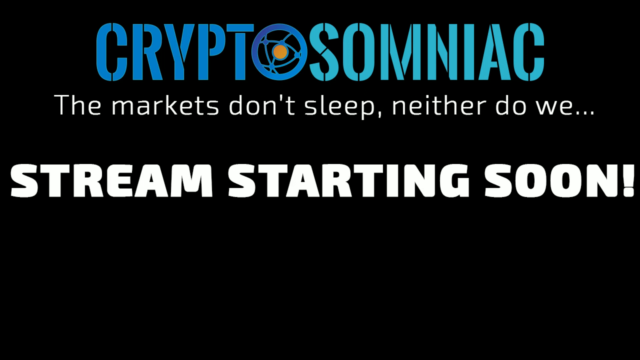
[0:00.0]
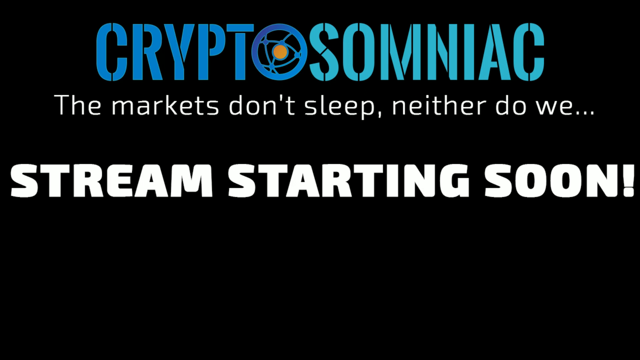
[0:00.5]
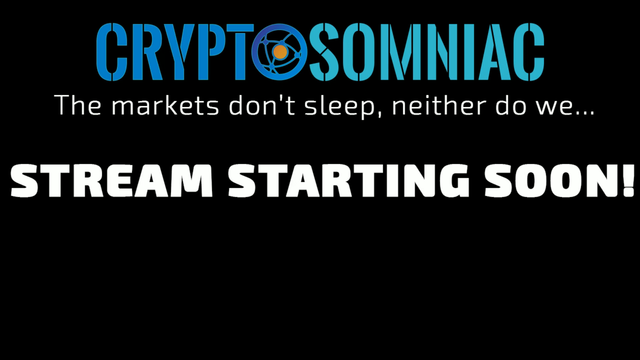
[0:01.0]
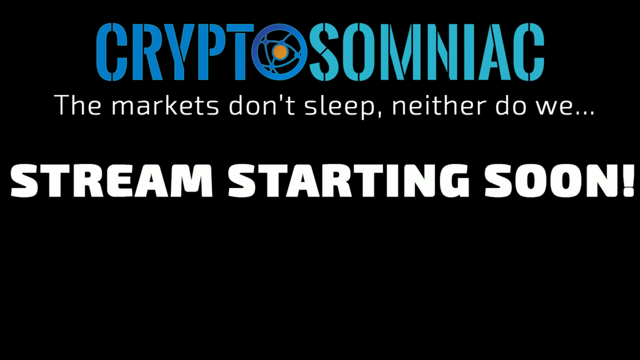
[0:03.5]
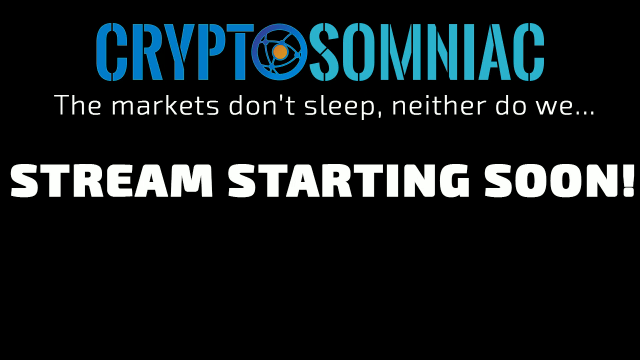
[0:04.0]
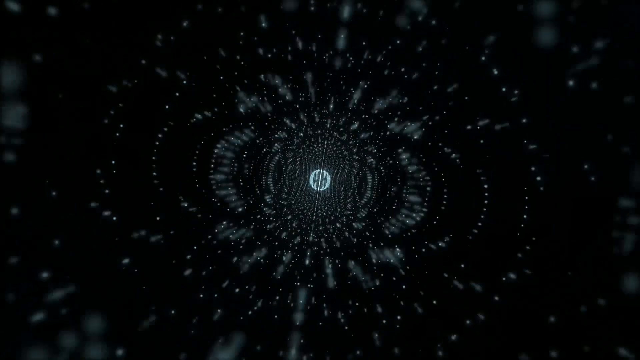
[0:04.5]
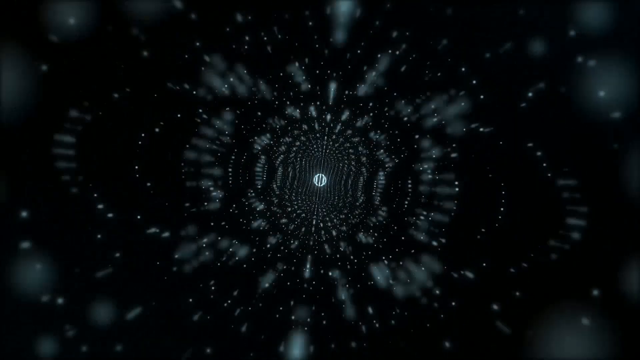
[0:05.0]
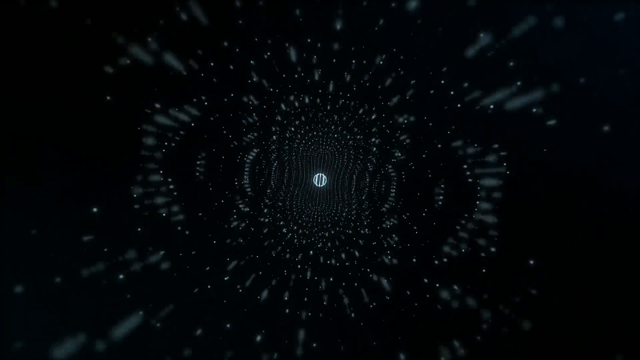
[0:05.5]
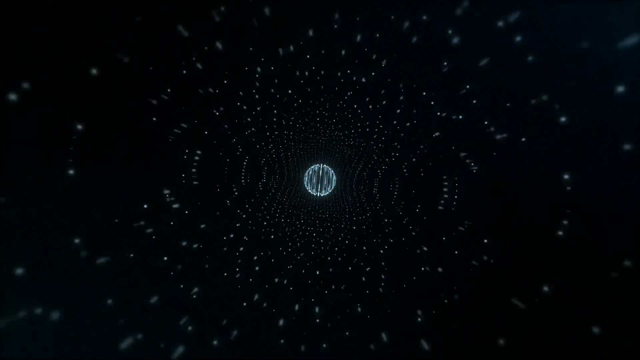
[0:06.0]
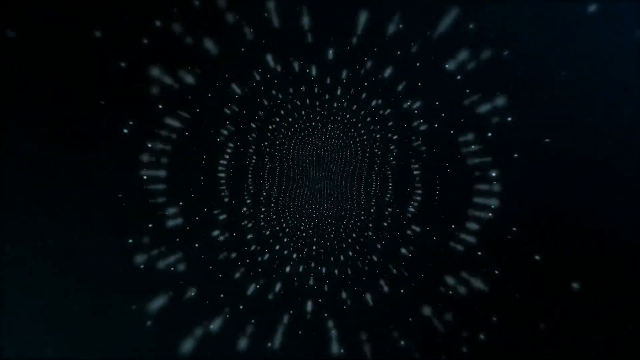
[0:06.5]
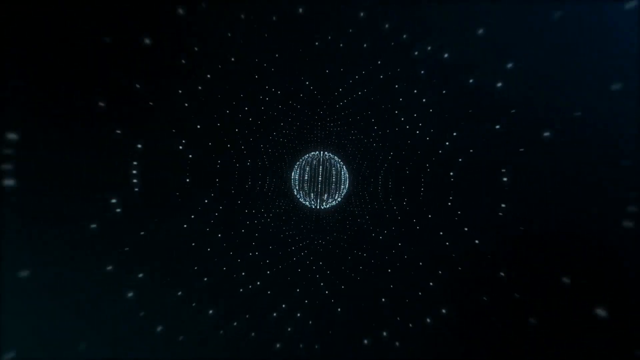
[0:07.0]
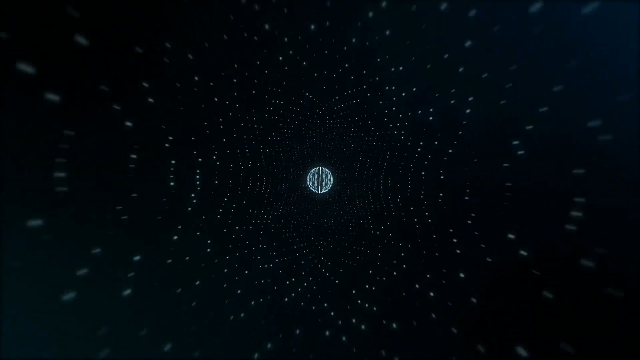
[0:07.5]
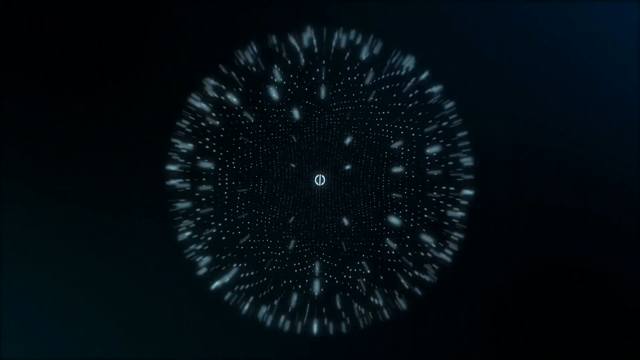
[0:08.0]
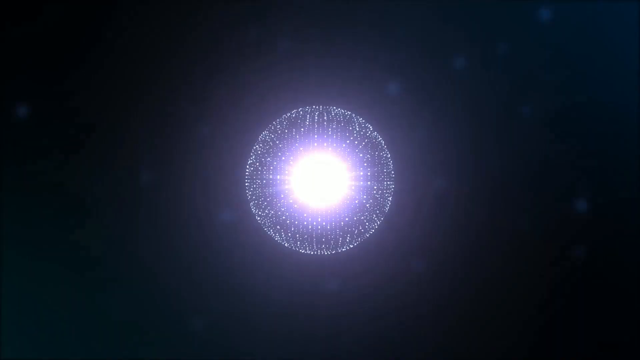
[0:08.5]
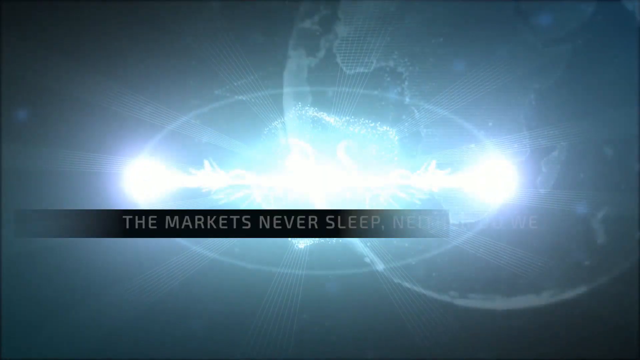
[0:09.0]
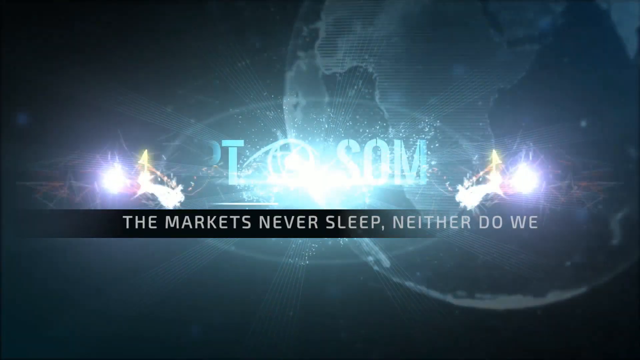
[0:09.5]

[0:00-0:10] On a black background, the word "CryptoSomniac" appears at the header in various shades of blue, with the logo serving as the O between the two words. Underneath it reads "the markets don't sleep, neither do we, streams starting soon." The image fades out a little, and then something almost like a galaxy appears, with stars forming balls of stars, before it kind of blows up into the logo. "CryptoSomniac" flashes in the middle of the screen, almost exploding, and galaxy-looking colors surround it. After the logo shows up, the world is in the background, less visible and kind of shaded.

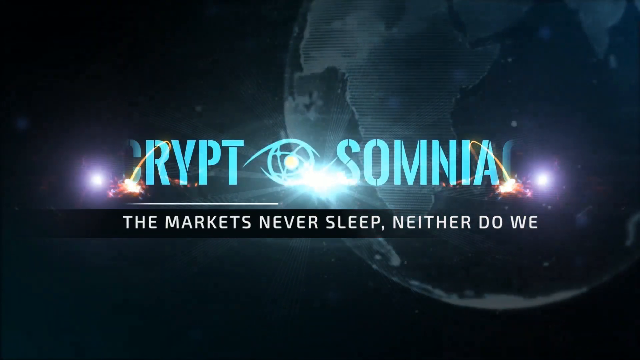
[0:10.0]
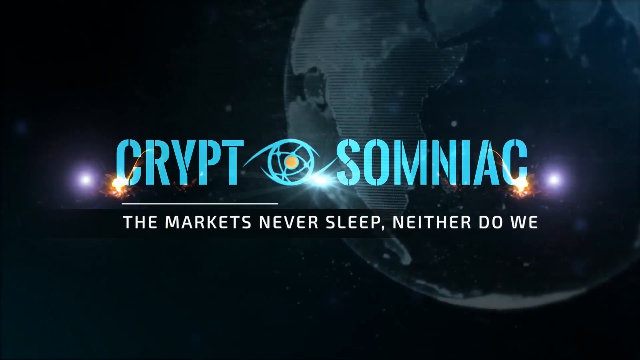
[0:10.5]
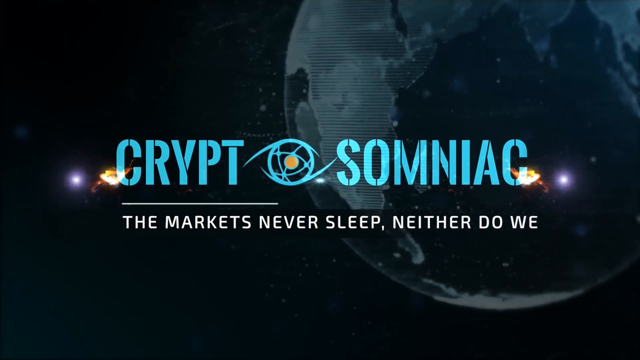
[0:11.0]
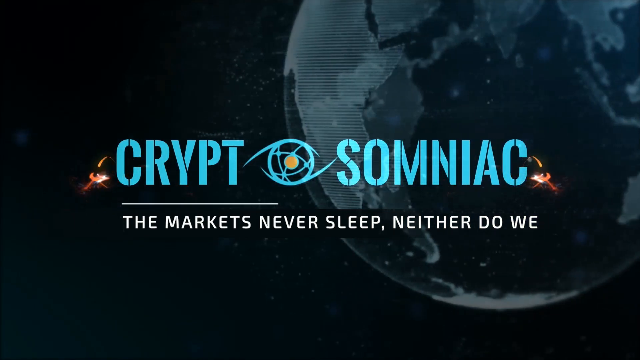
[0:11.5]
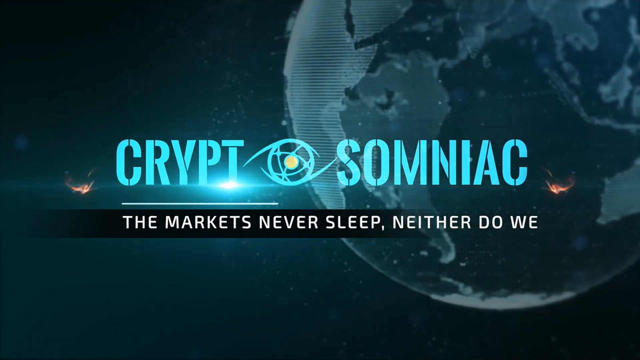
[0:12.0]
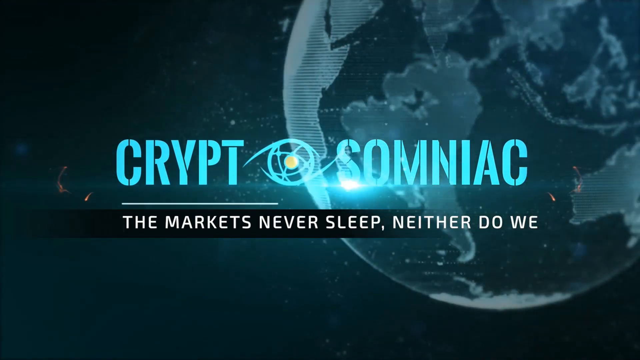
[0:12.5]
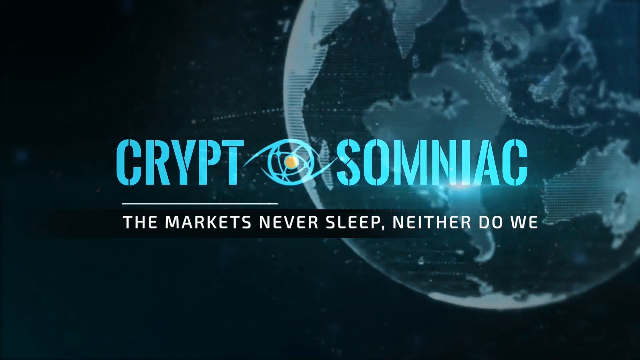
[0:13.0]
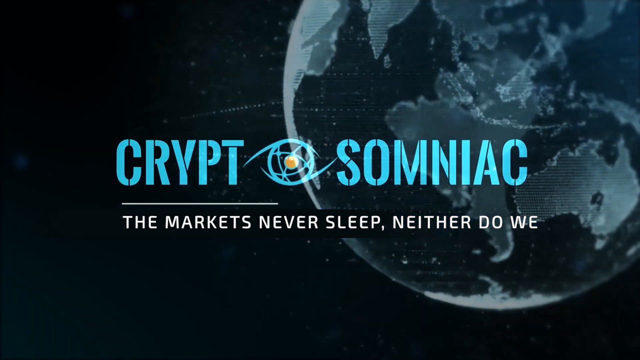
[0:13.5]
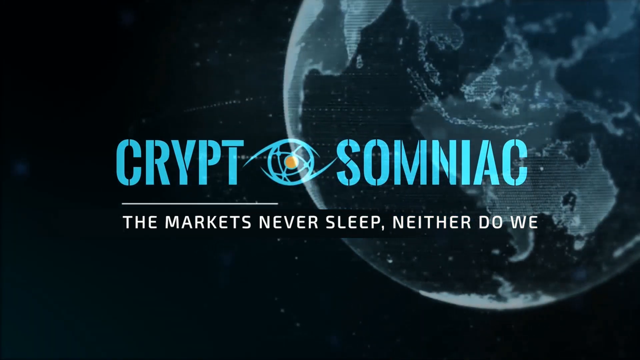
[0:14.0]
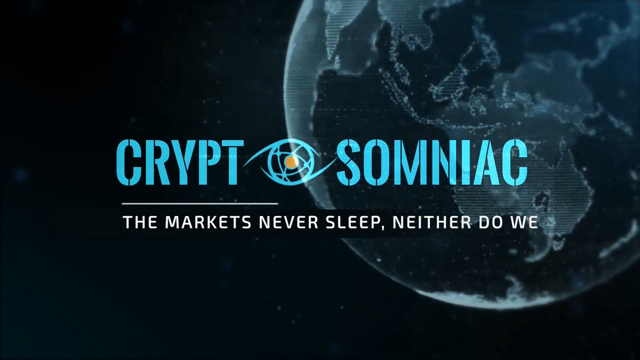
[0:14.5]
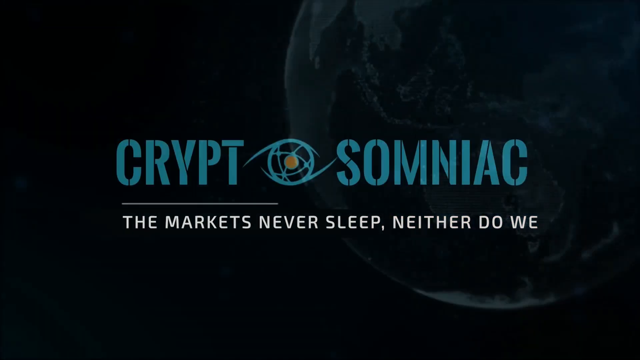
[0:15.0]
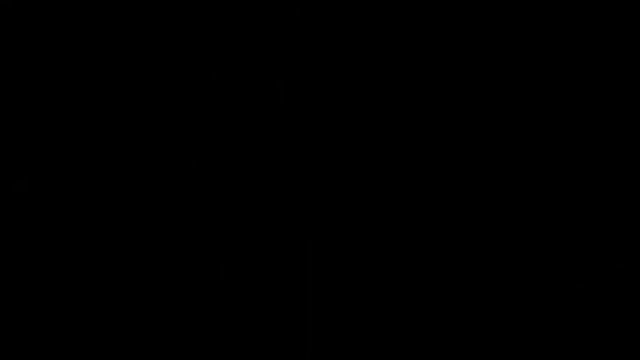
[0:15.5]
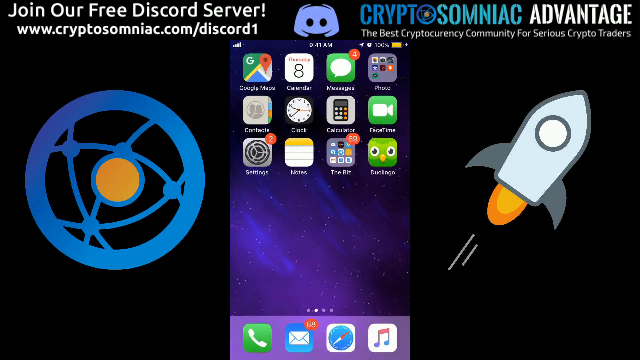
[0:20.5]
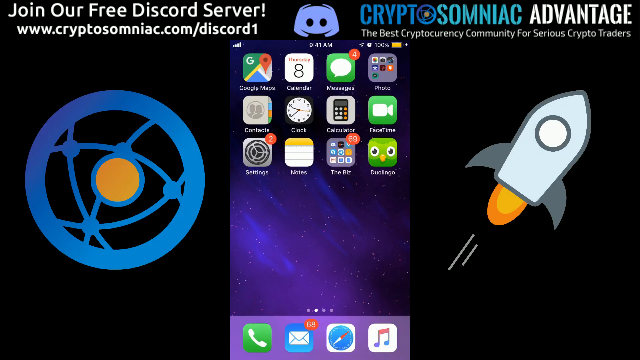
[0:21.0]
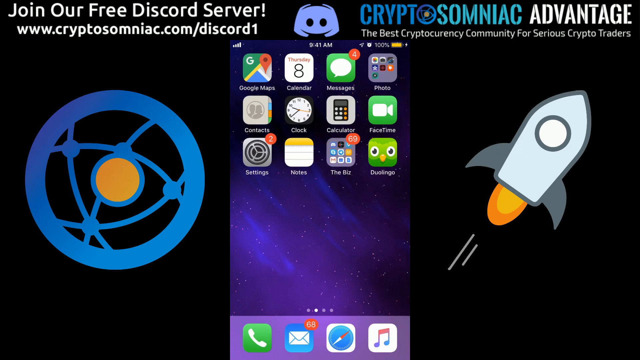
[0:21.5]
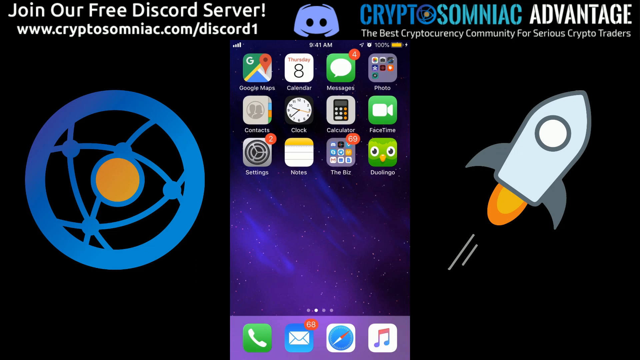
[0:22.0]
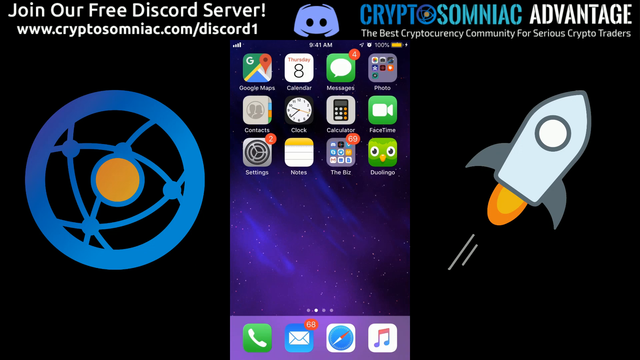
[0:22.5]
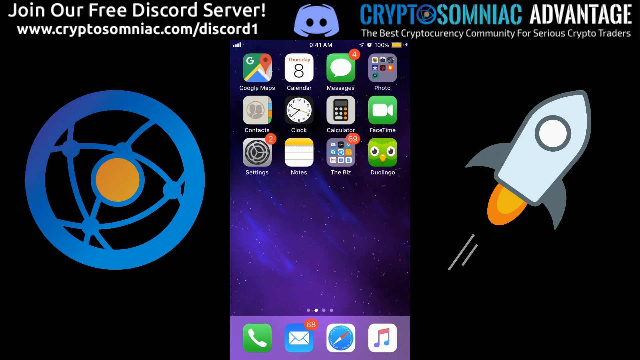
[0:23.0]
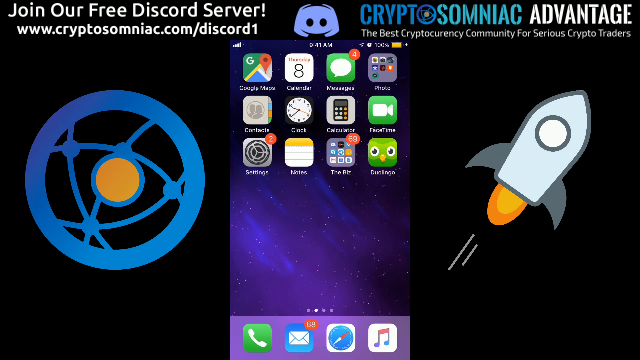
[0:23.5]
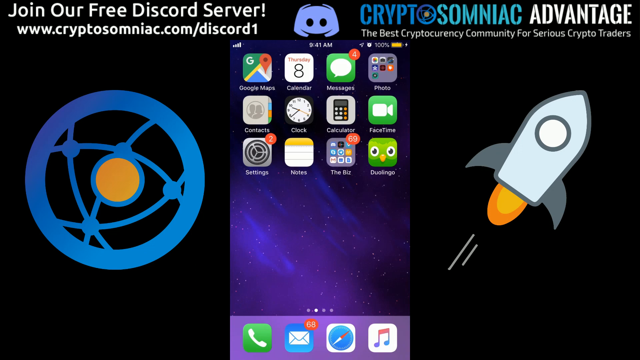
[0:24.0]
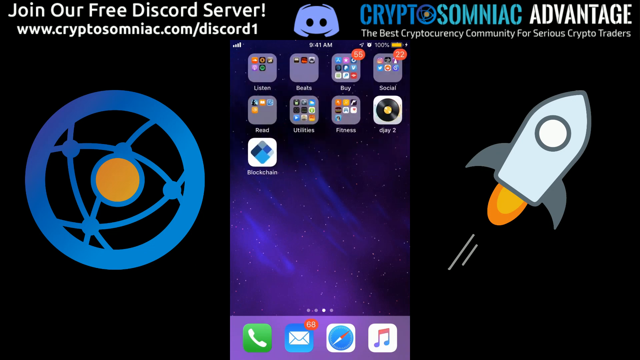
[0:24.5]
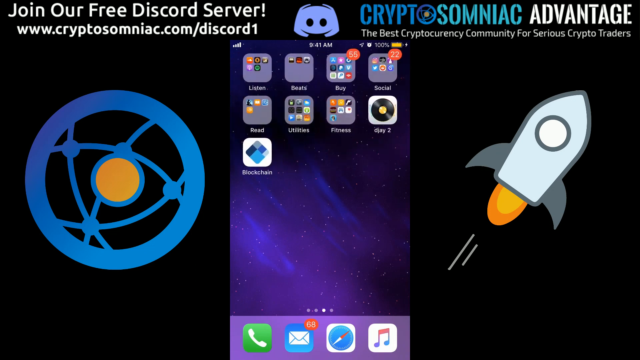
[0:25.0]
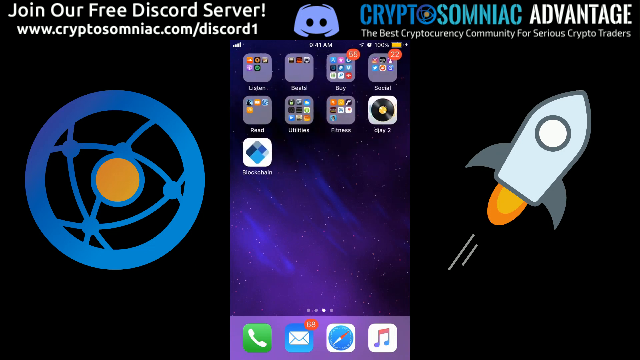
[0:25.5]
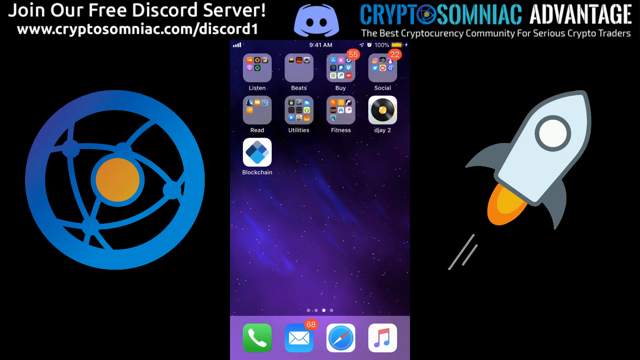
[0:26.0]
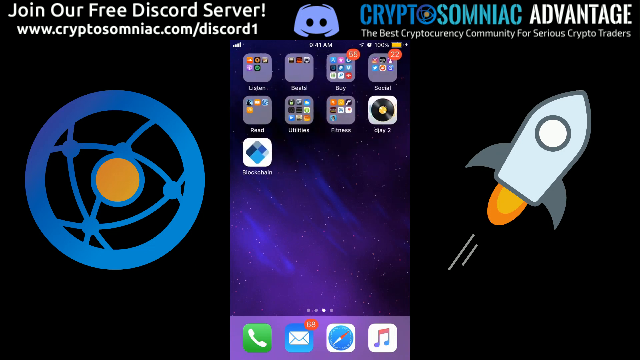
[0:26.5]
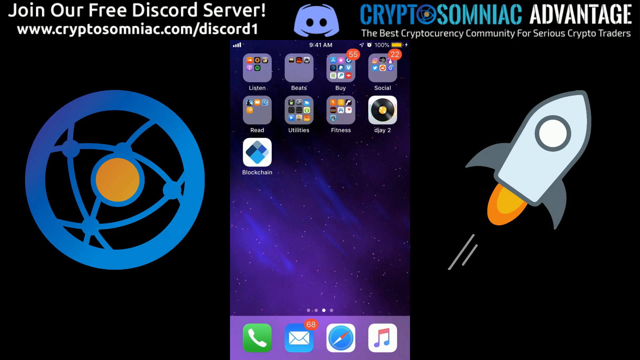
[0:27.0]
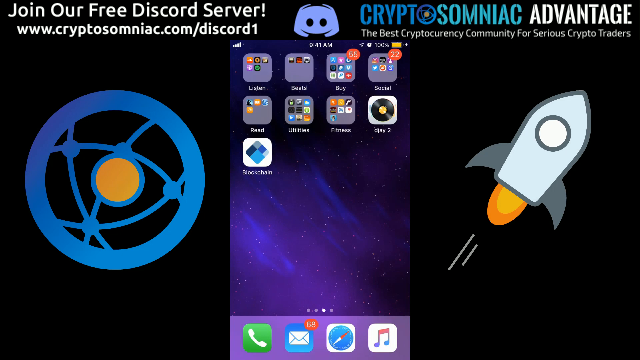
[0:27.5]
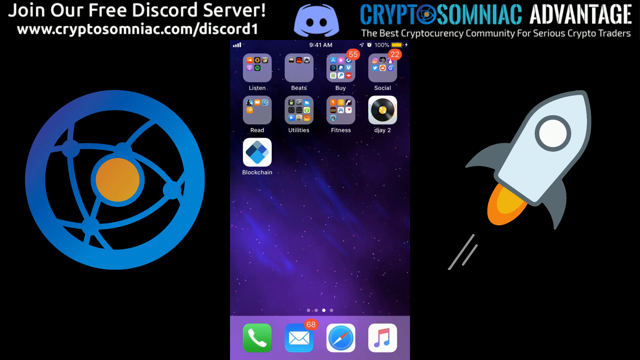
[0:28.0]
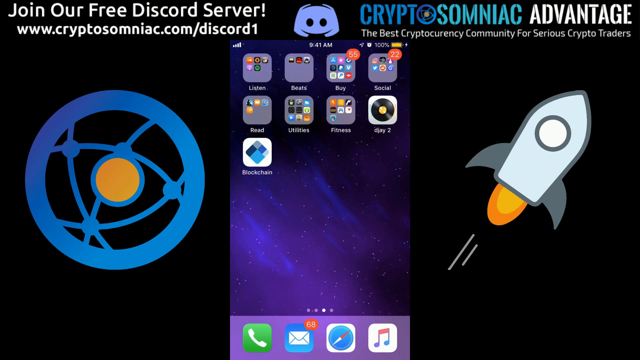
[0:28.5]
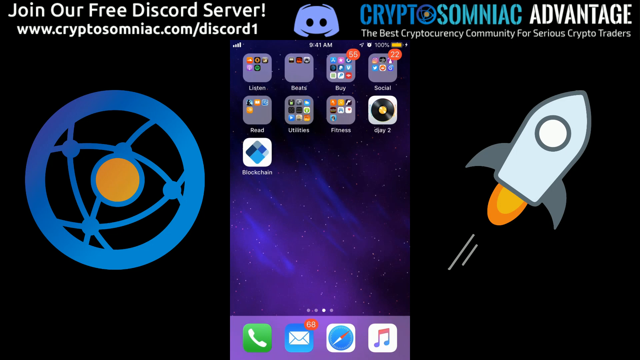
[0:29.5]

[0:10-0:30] On a black background, the word "Cryptosomniac" is in the middle with the tagline "the markets never sleep, neither do we." In the right corner, the world is embedded in the background, kind of shaded out, present but not prominent. A few galaxies and stars emanate across the screen. The world turns, and a line moves under the logo name. There is a brief pause on a black screen. Then the logo O appears on the left, an app menu in the middle with a controller or alien face above it, and a rocket ship on the right. The screen jumps to "join our free Discord server, Cryptosomniac Advantage, the best cryptocurrency community for serious crypto traders." It then fades out, and the logo O, the app menu, and the rocket ship are on the screen.